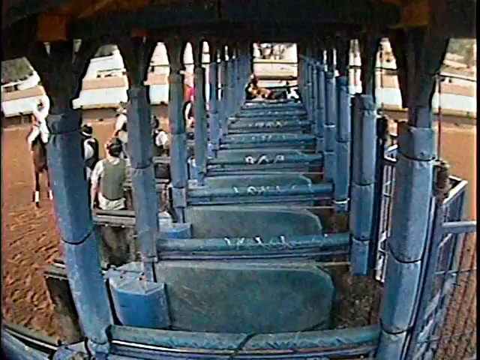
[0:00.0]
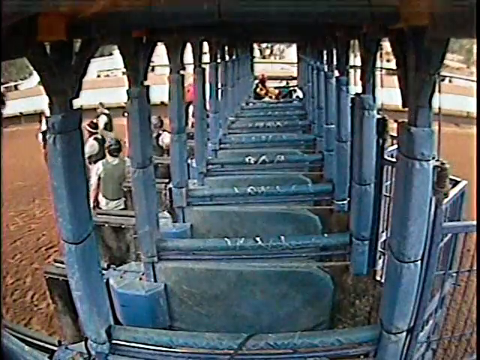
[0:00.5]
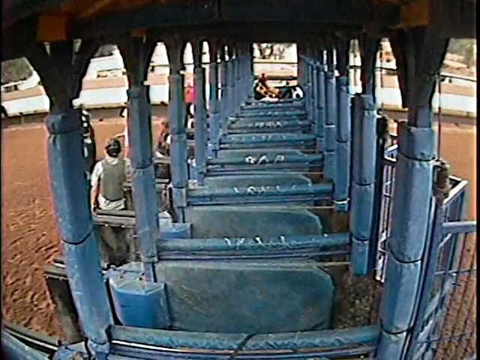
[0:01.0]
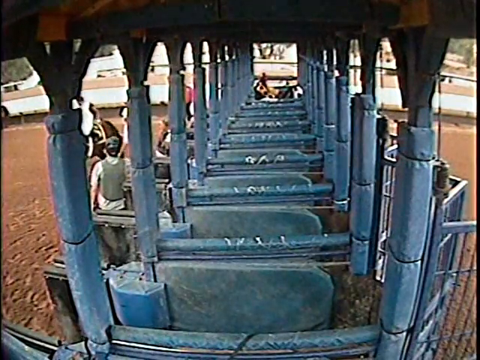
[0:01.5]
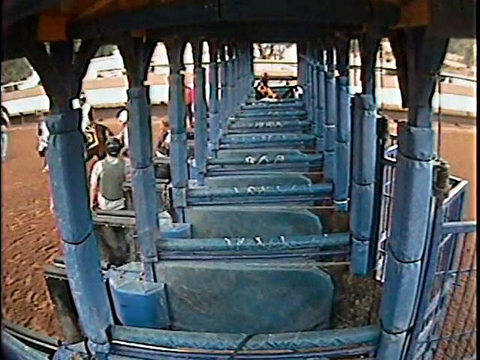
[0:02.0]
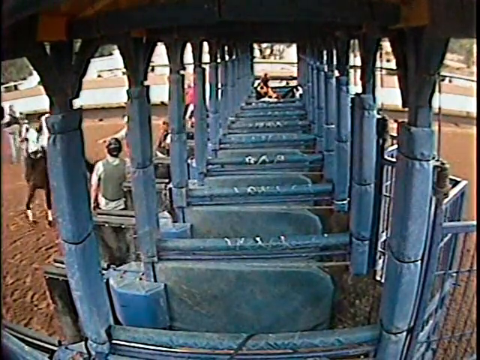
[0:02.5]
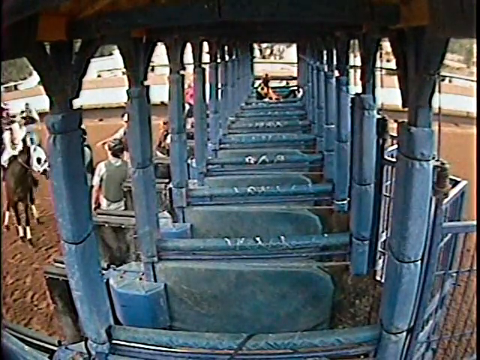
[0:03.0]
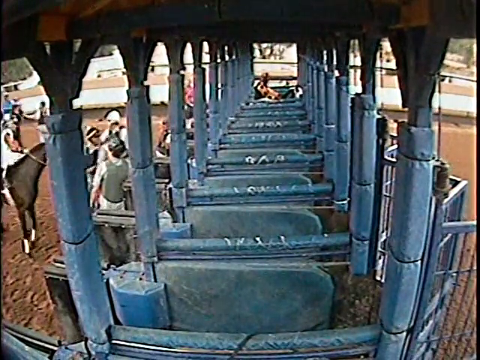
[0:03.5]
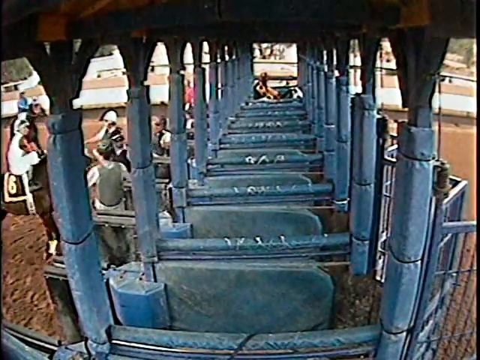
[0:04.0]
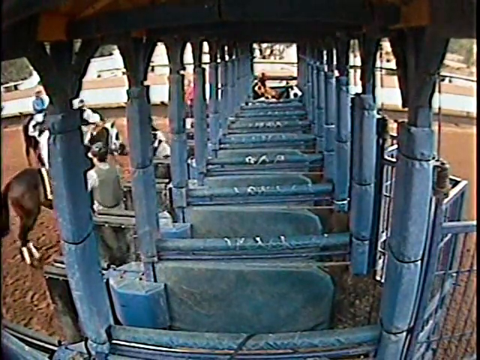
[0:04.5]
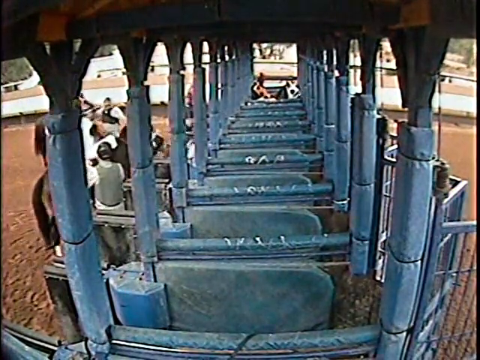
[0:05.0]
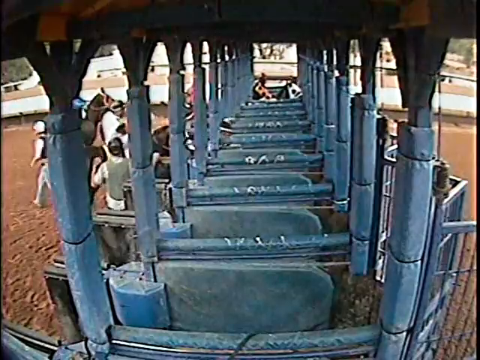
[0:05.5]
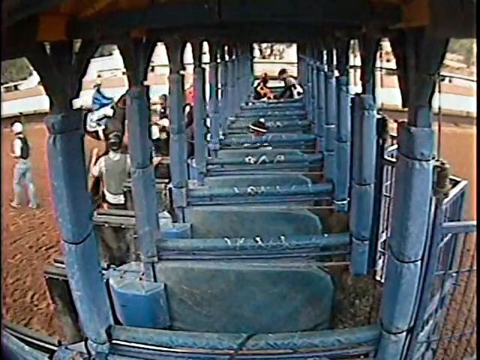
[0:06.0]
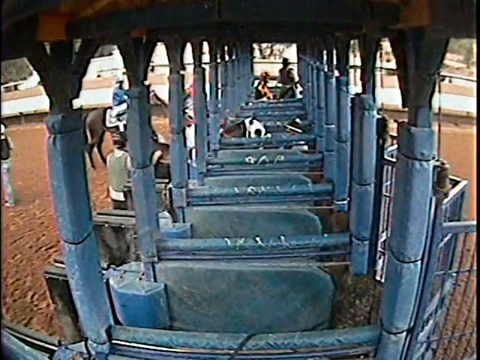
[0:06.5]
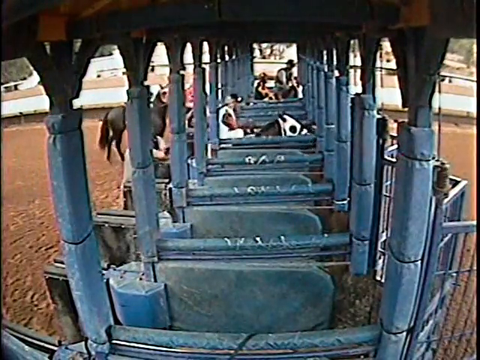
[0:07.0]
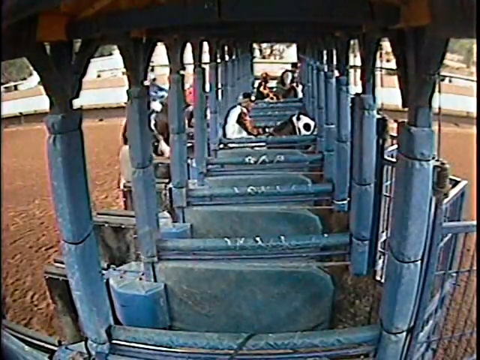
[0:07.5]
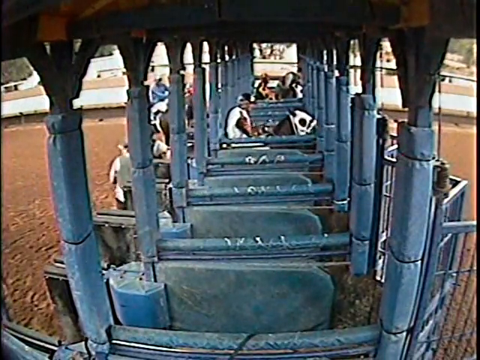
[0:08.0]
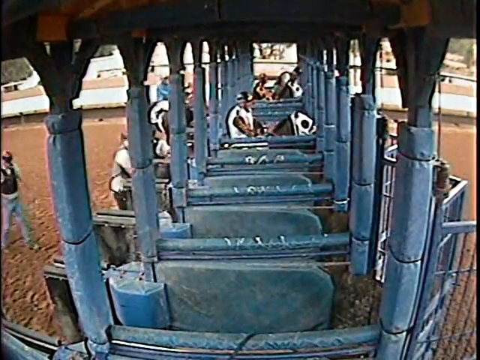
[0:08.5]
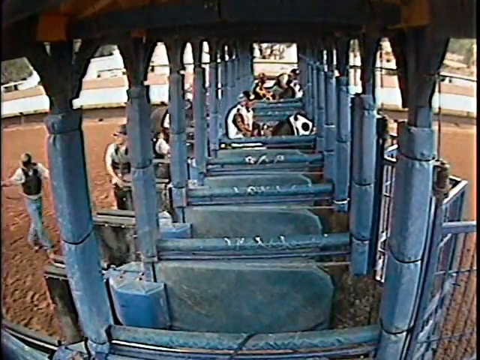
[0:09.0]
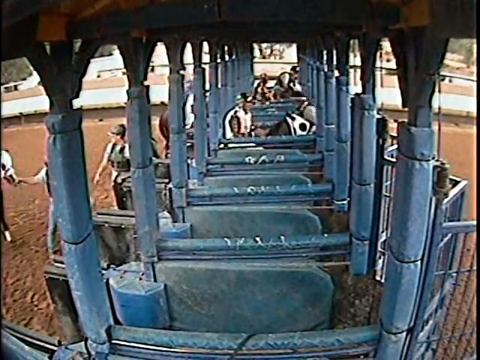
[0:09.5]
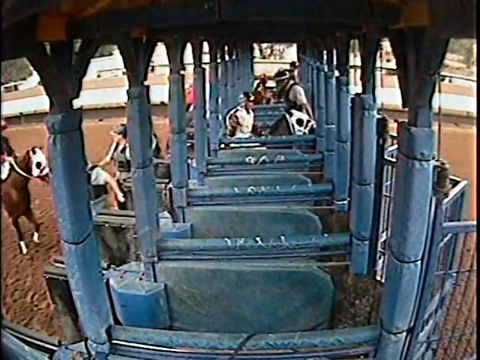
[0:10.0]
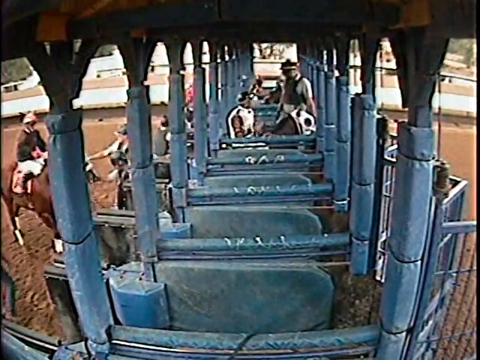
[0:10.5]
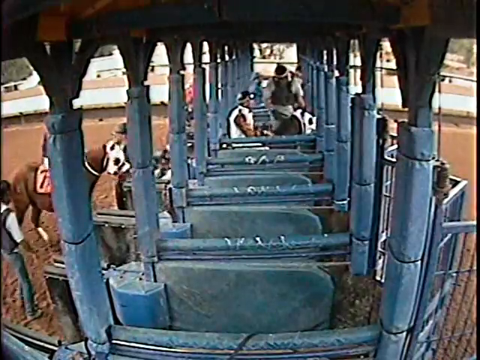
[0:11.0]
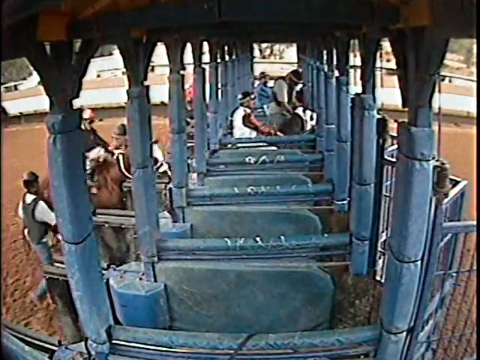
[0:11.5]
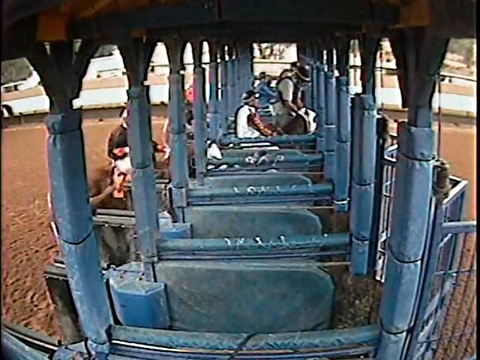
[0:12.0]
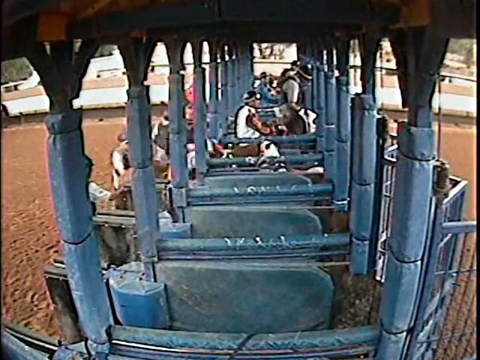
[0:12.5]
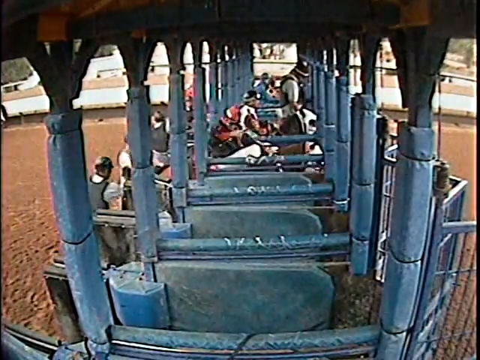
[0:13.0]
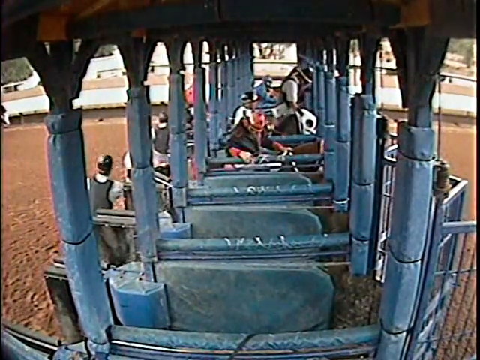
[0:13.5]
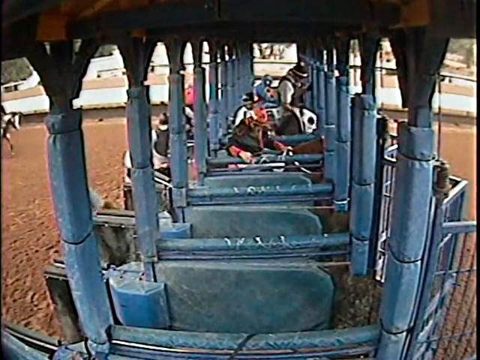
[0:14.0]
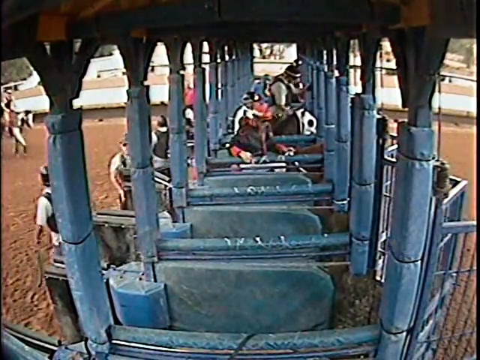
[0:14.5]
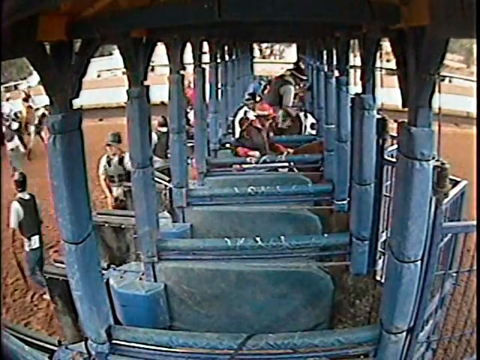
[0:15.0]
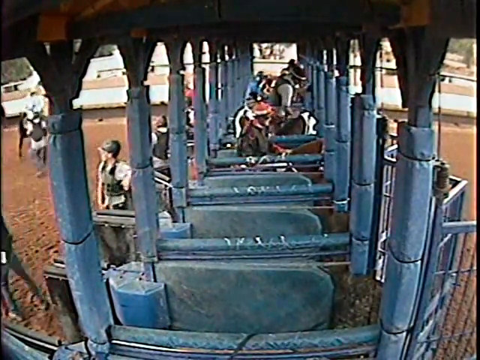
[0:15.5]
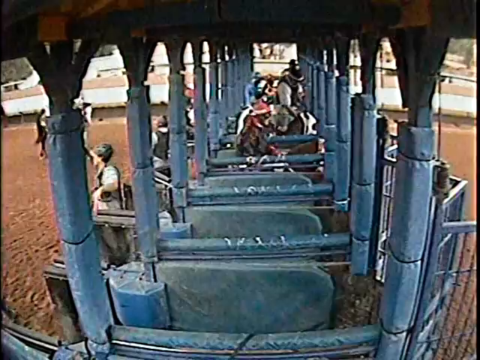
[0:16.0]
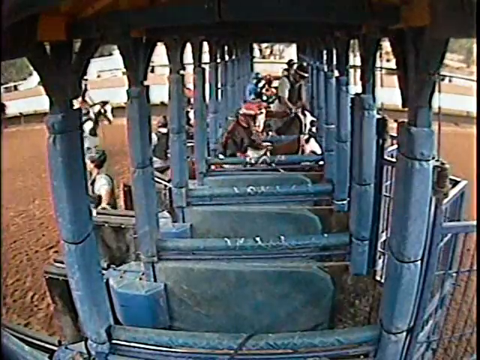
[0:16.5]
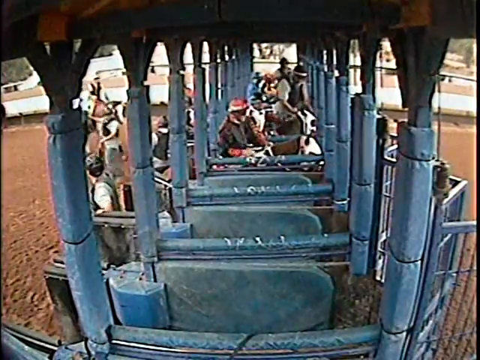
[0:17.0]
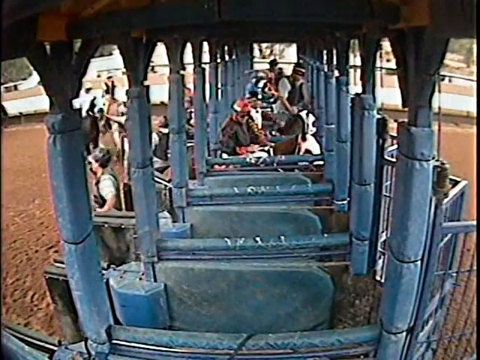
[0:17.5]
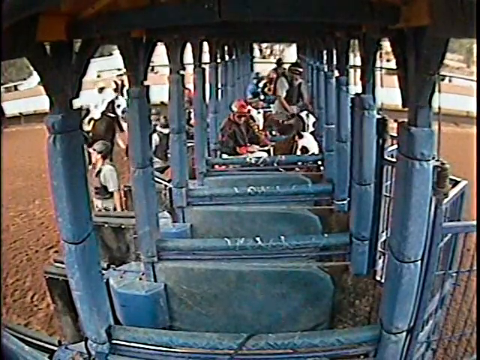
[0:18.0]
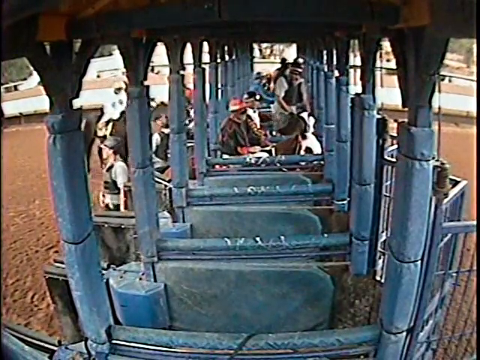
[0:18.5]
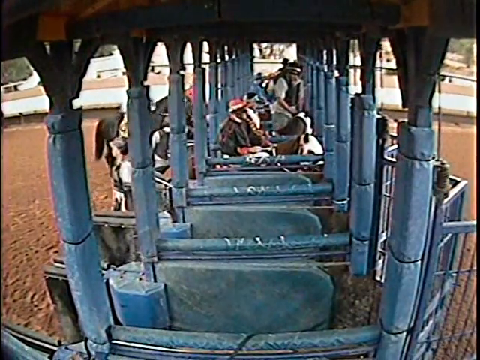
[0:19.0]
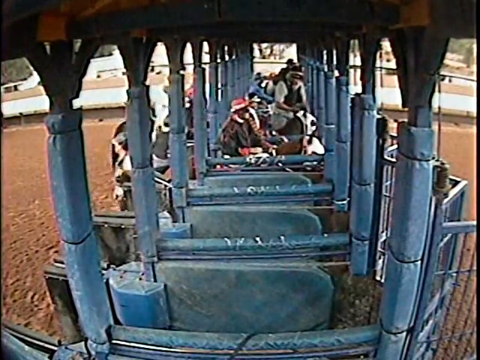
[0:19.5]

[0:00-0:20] The video apparently shows a view of the starting gate of a horse race, looking down the line through all of the gates. On the left side there is dirt ground and a rider on a dark-colored horse, and some people mill about on that side as well. Horses with riders on them move around. Number six goes into its stall or gate, and another horse, number seven, is let in. The jockeys are on the horses, wearing helmets and their gear. The view is very up close, just inside the stalls, with a little visible on the left and right; the horses and jockeys seem to be getting in place and preparing to start the race. Gates on the right side are shut. The gates and everything are blue. In the very far background there is something light-colored that looks like grandstands, maybe. The footage is pretty blurry and out of focus, looking almost like security camera footage rather than clear, precise video.